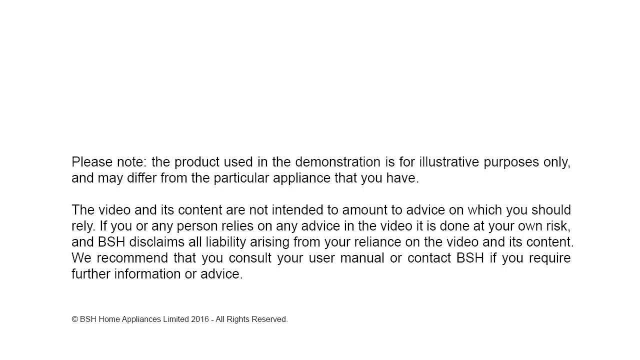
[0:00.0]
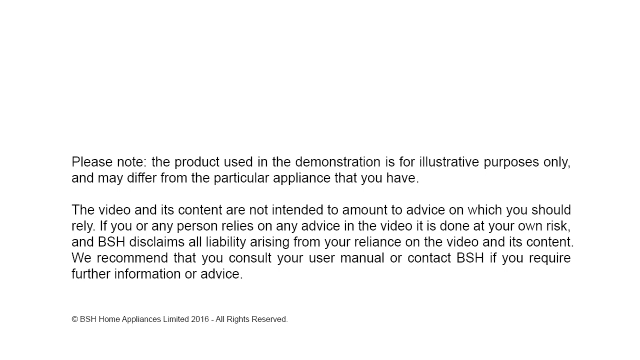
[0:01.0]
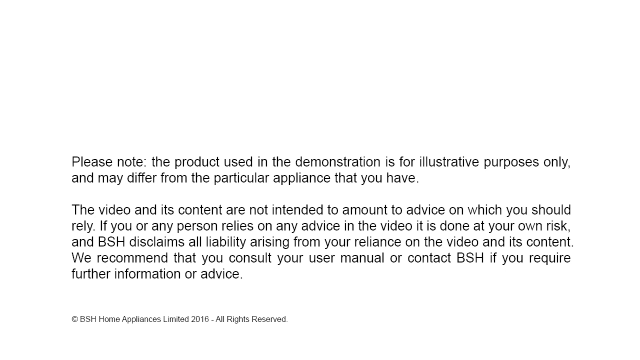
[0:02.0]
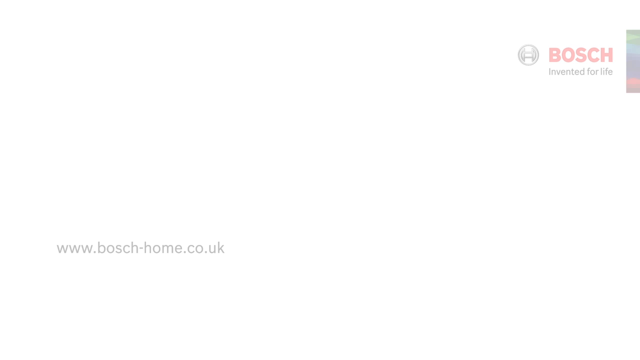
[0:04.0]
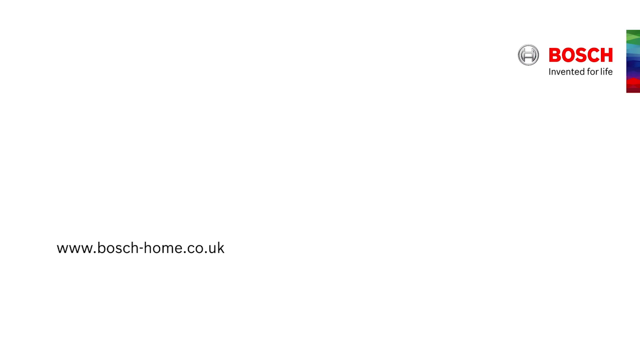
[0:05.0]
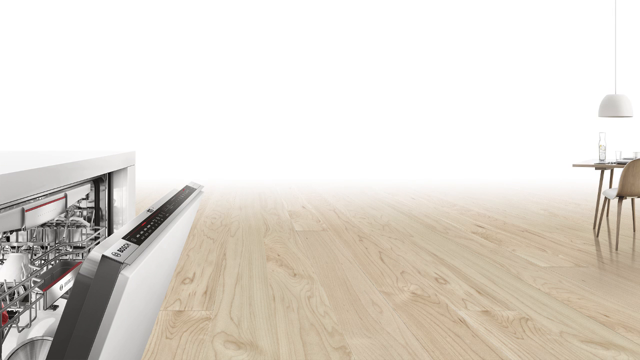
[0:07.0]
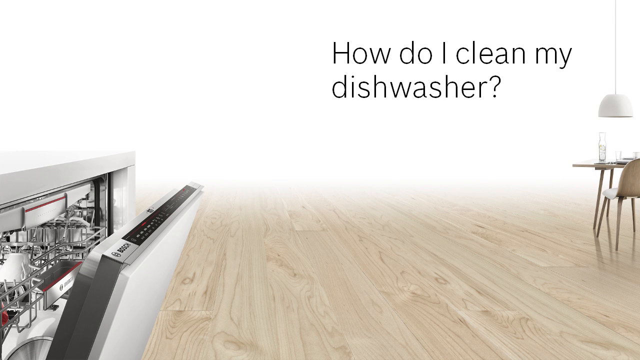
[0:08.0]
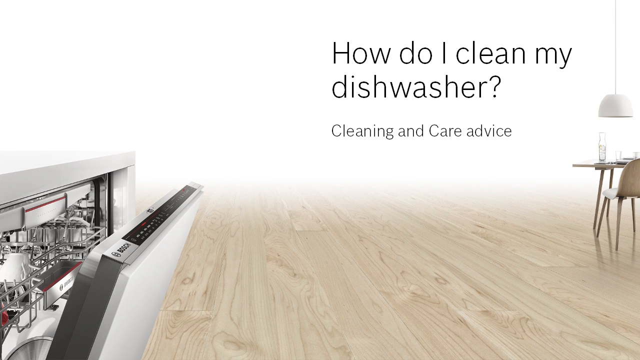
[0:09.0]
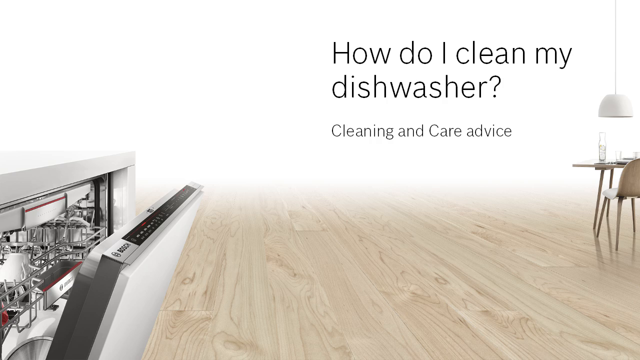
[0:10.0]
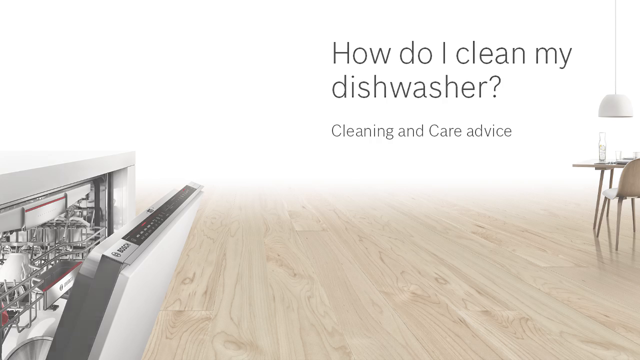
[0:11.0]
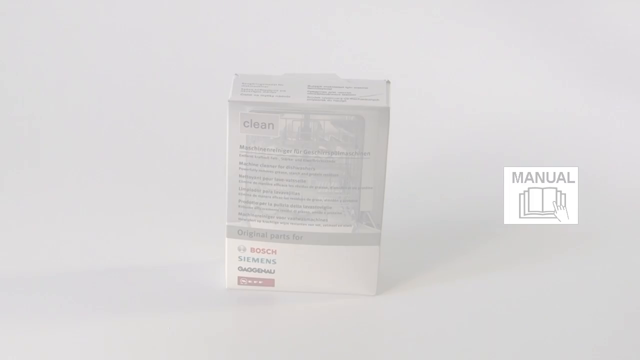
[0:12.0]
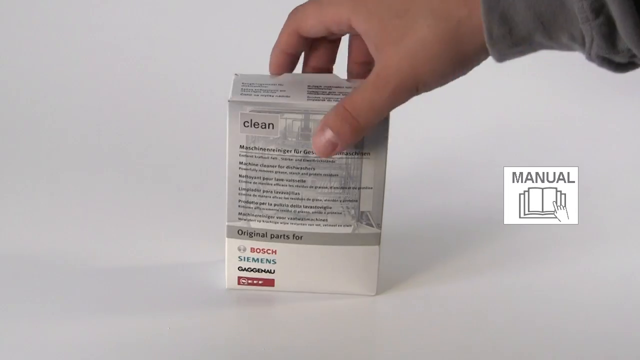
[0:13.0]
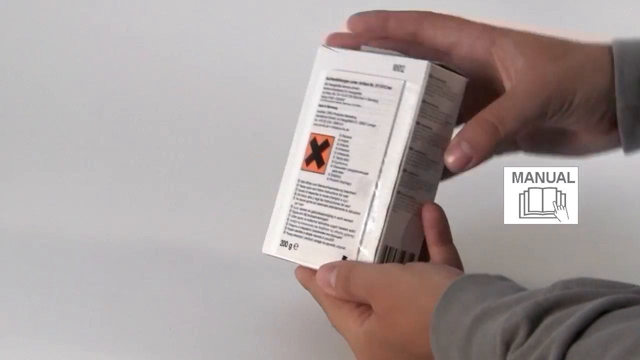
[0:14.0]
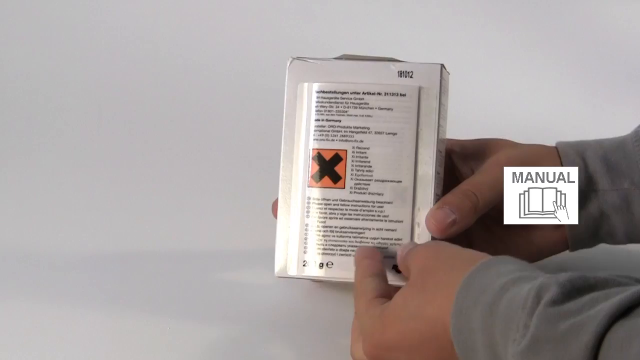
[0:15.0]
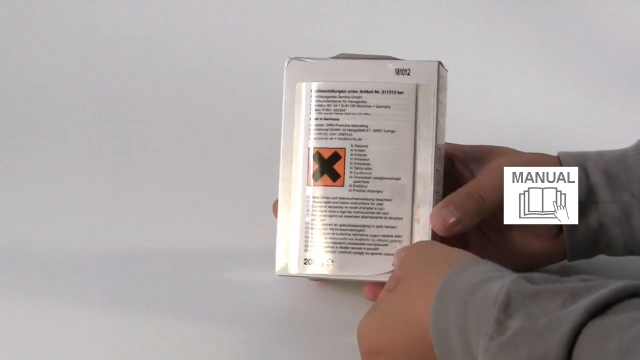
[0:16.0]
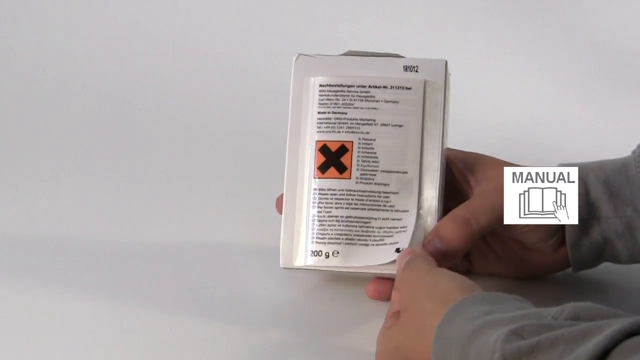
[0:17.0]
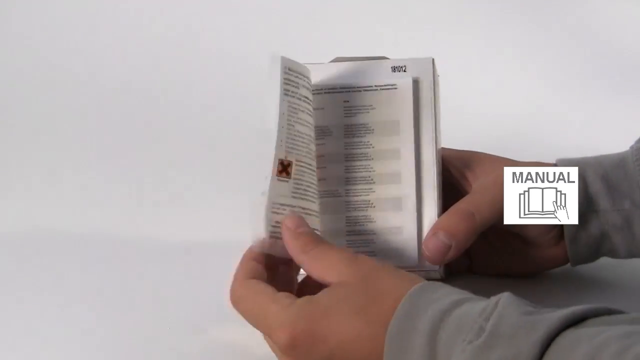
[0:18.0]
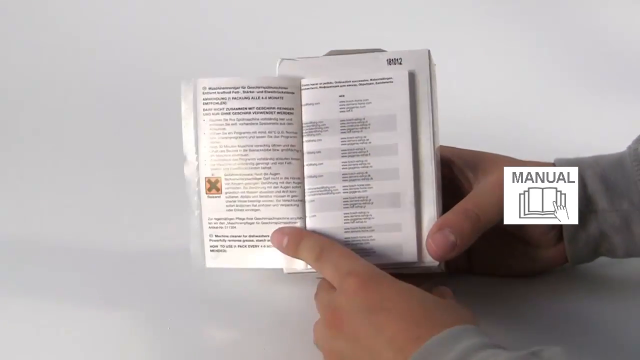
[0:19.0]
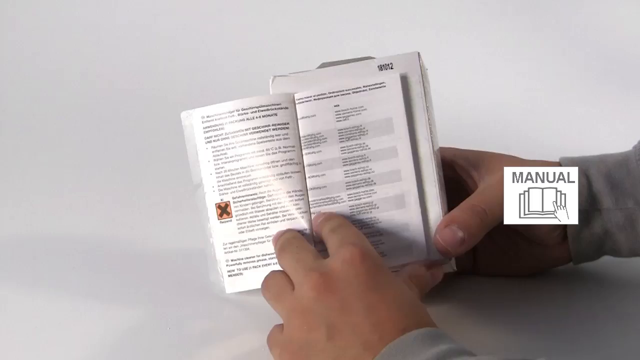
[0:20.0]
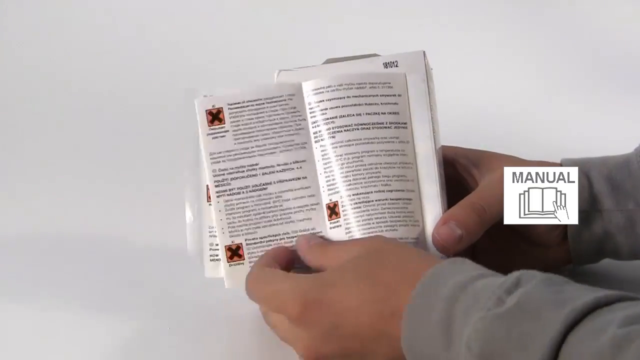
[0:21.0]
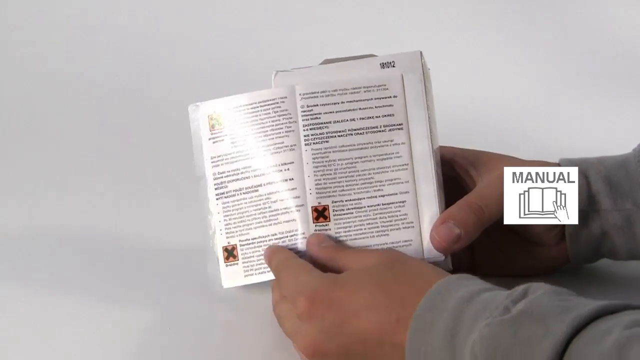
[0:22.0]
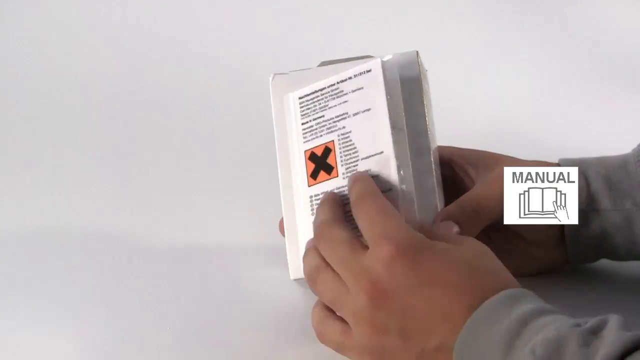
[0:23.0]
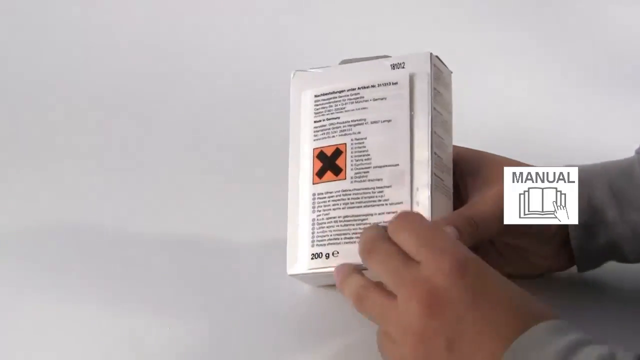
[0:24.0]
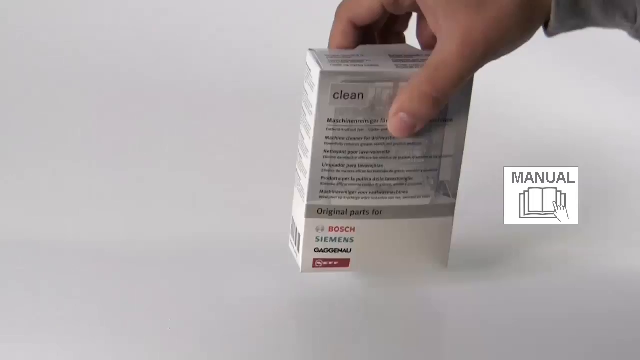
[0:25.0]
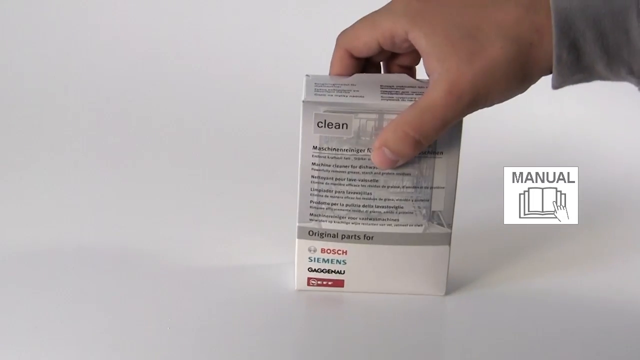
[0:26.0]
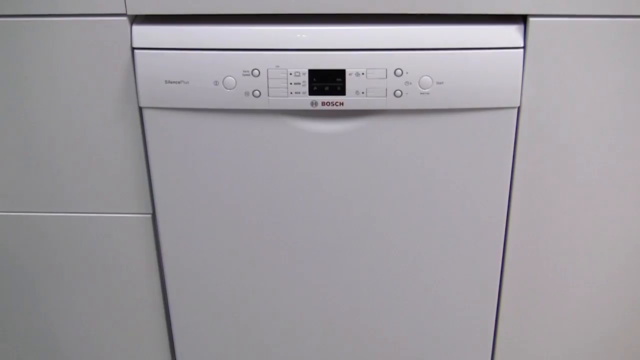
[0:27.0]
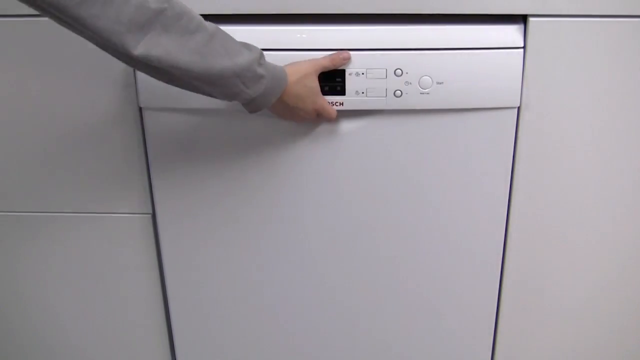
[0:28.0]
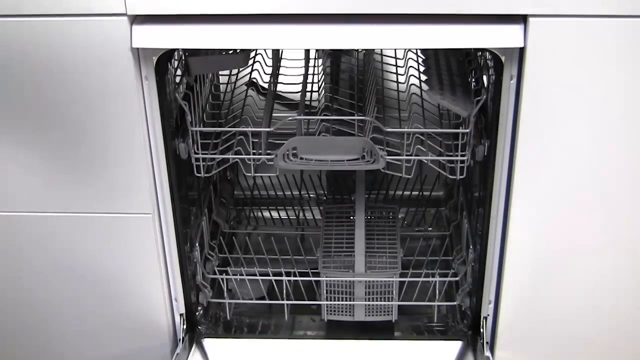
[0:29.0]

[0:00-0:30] The video opens on a widescreen disclaimer, with the body of text taking up mostly the bottom half of the shot, stating that the product used in demonstrations is for illustrative purposes only. The next shot shows the Bosch logo at the top right and the Bosch website at the bottom left. Next comes a mostly white background with some wooden floorboards visible at the bottom to simulate a house setting; a dining room with an overhead light is on the right of the screen and a dishwasher is on the left. Black text at the top right reads "how do I clean my dishwasher", and then a subtitle appears reading "cleaning and care advice". The next shot shows a box with "clean" on it and text below reading "original parts for different companies"; on the right of the screen is a white square that says "manual", showing a manual-looking book with a hand on top of it. The box is on the table, and a right hand comes into the shot, picks up the box, spins it around and rests it on the left hand. The person holding the box wears a grey long sleeve; their right hand holds the sides of the box at the back while the left hand props it up from the bottom. They start to lift a sticker of some sort where an arrow points toward the top left, indicating to peel it off, and peeling it reveals that it is actually a page of a manual with some writing inside. They flip through another page with the left hand while the right hand holds the box up, then close the pages back onto the box with the left hand. They spin the box around with the left hand holding the bottom, grab the top with the right hand and put it back down on the table. The next shot shows a Bosch dishwasher from the perspective of the bench down, and the same person in the grey long sleeve reaches in from the top left with their right arm to open the dishwasher using the undergrip handle.